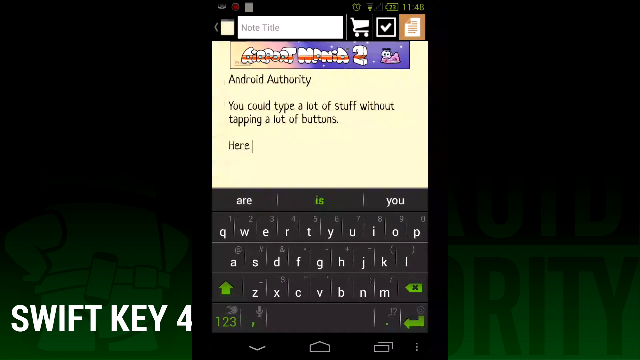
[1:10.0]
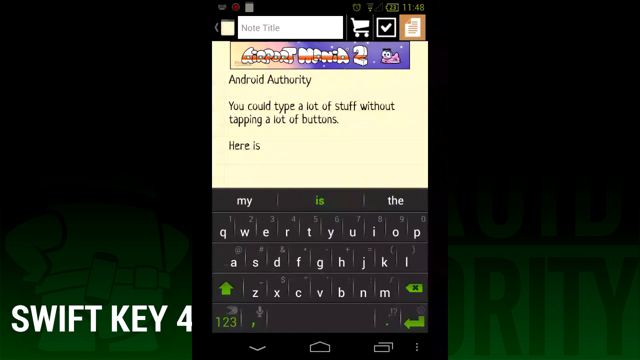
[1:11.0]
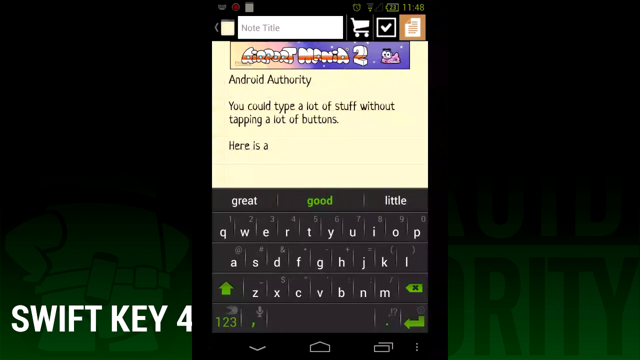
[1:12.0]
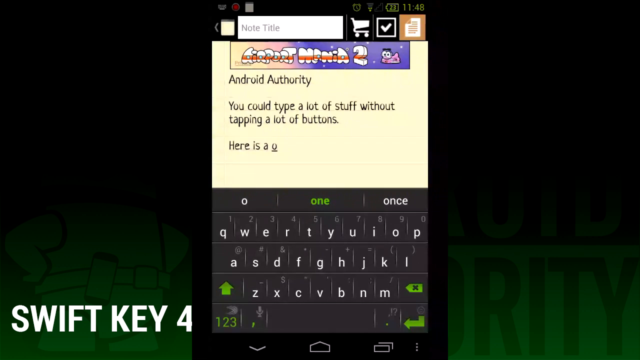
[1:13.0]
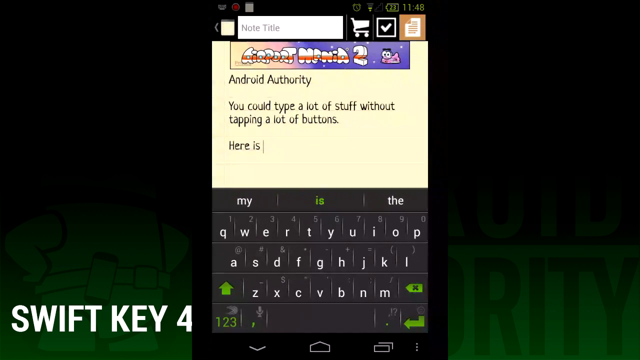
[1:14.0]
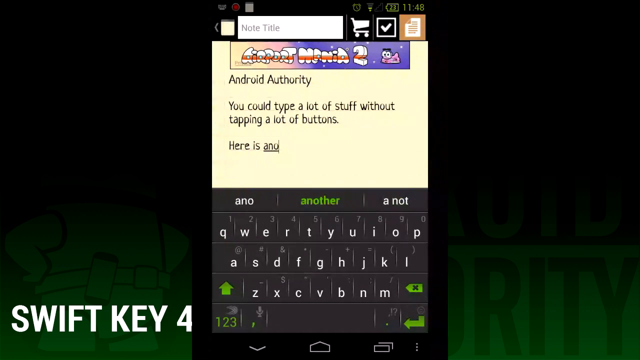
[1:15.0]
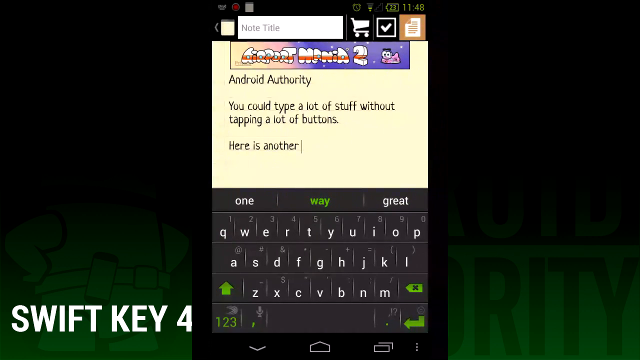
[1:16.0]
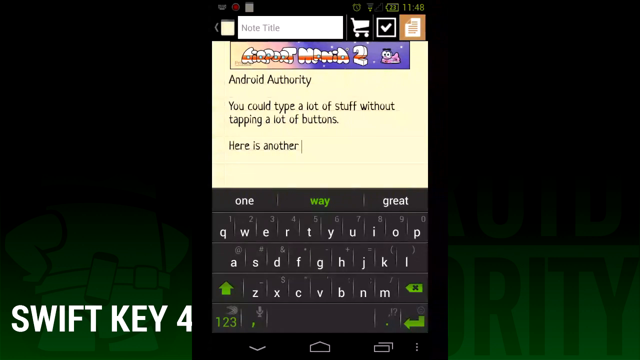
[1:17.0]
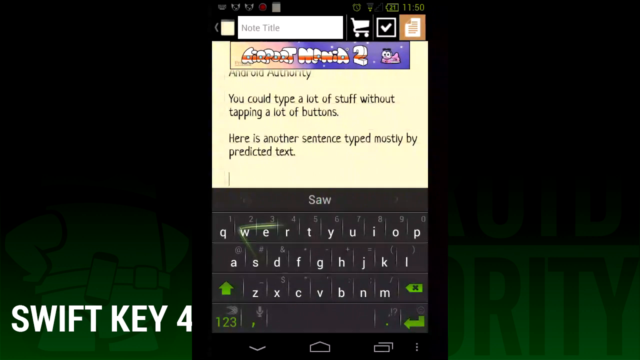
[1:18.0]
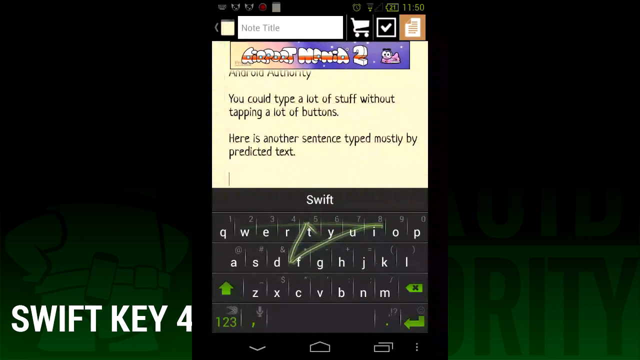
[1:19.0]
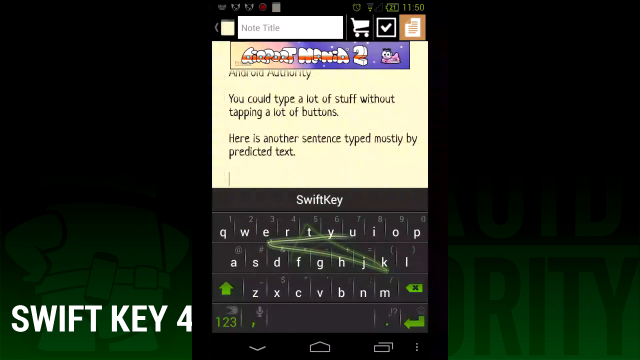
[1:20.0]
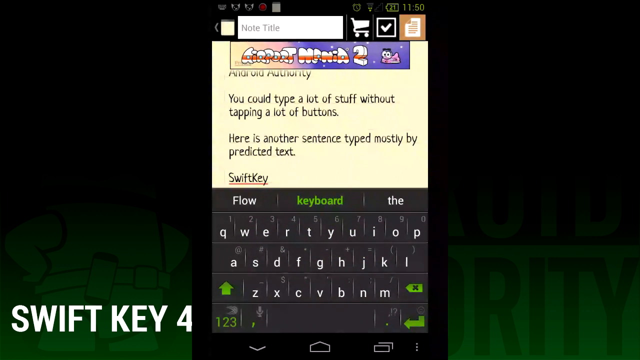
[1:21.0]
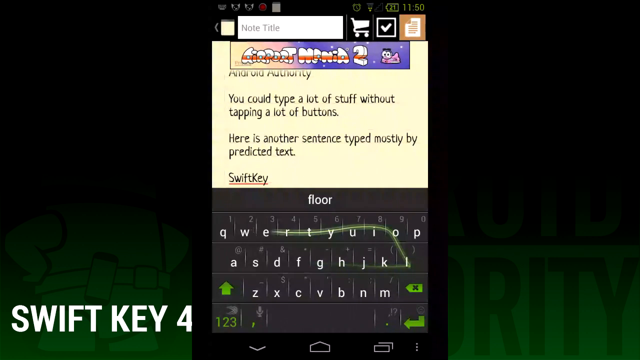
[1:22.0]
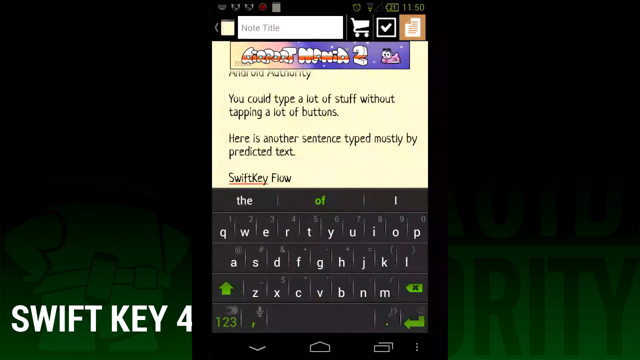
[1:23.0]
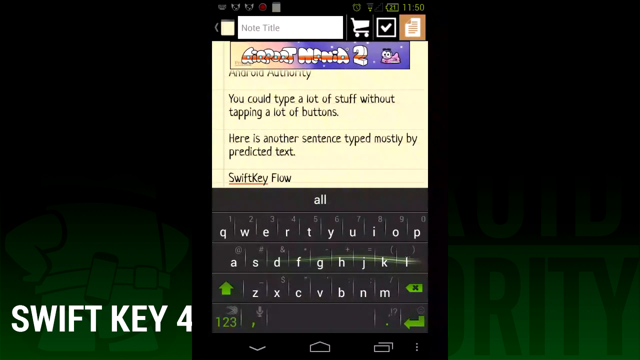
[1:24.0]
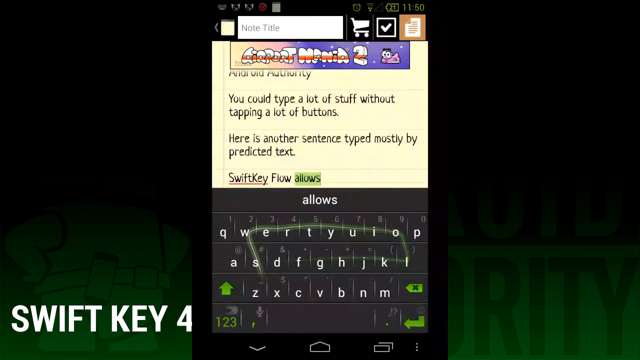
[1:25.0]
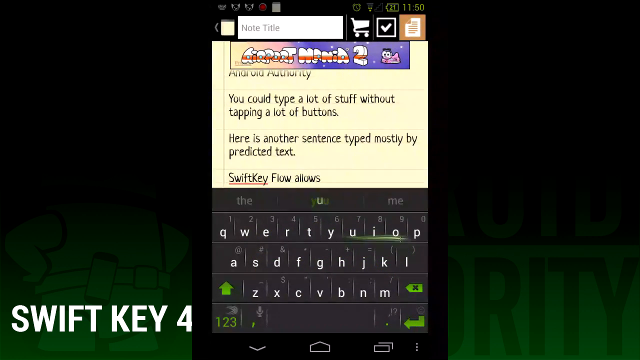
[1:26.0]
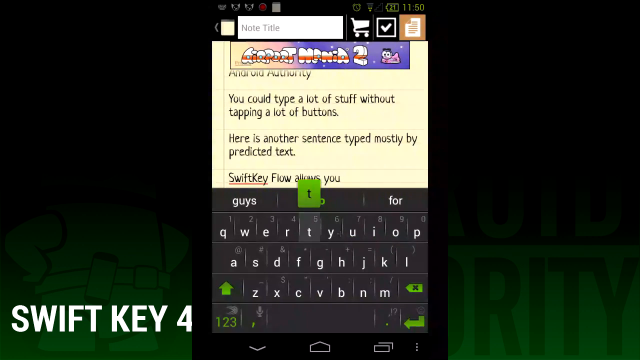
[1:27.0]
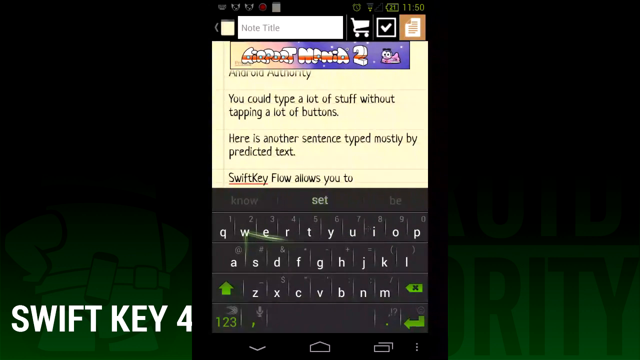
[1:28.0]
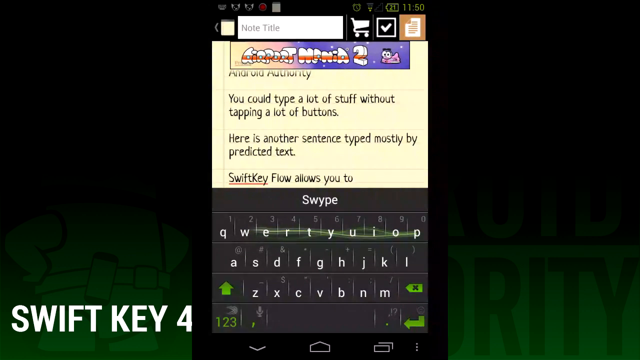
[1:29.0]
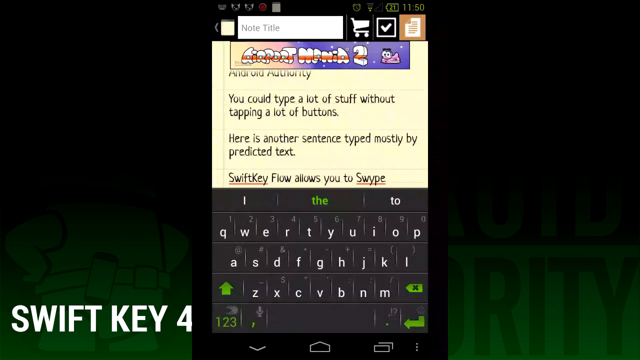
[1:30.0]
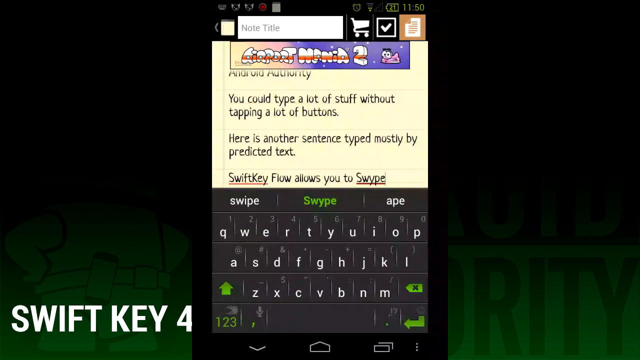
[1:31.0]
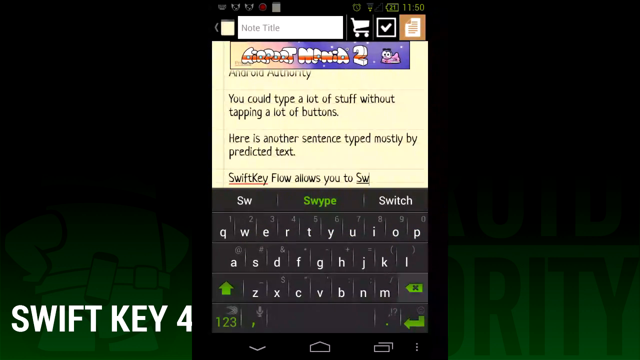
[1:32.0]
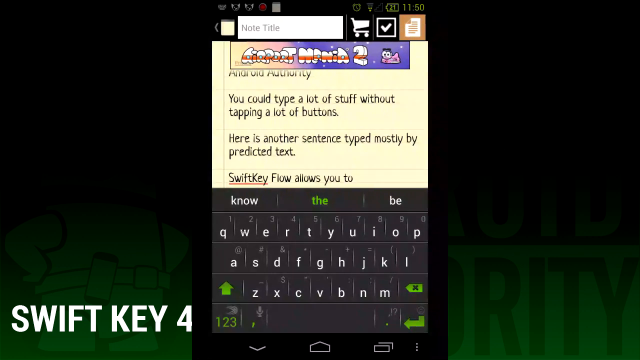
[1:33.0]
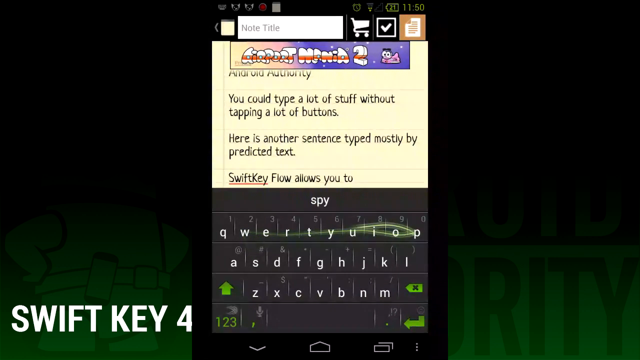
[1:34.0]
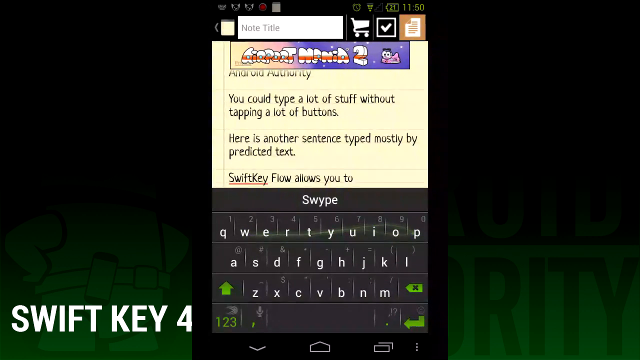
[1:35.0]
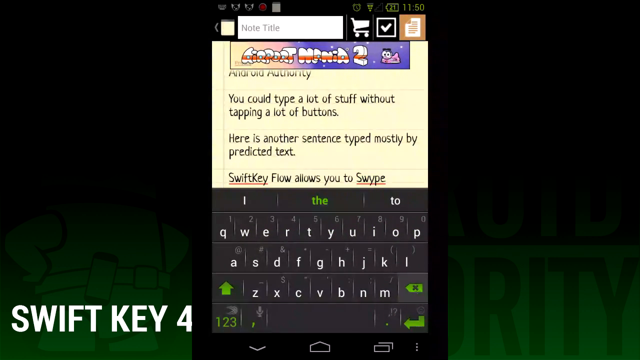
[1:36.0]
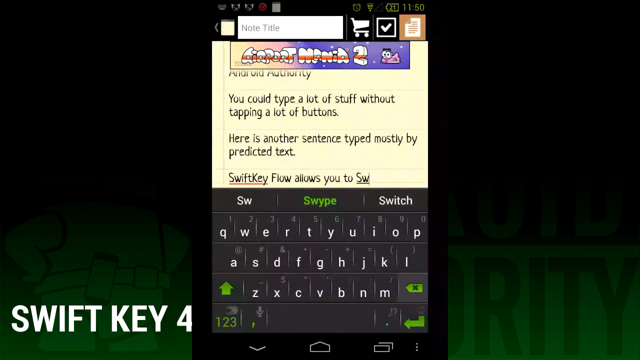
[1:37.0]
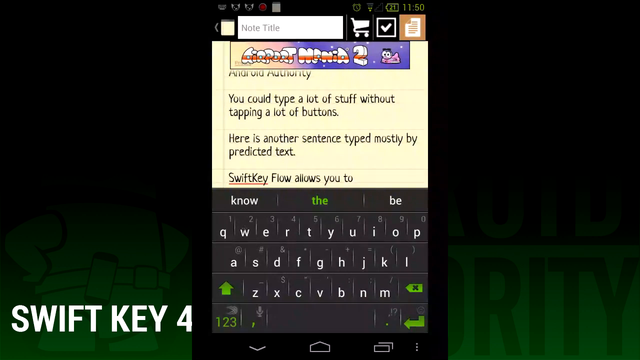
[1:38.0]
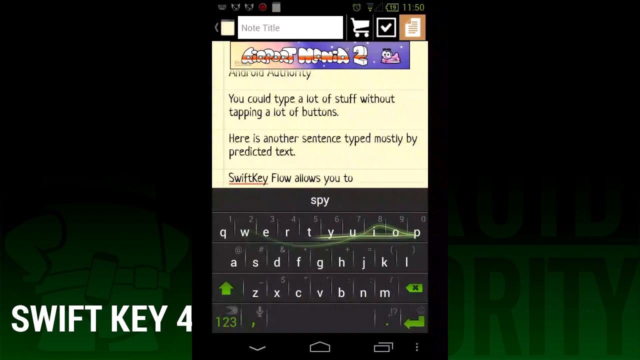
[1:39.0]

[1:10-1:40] The screen says "Android Authority" and, after a space, "you could type a lot of stuff without tapping a lot of buttons". The person starts typing again, and the sentence is capitalised. The typed text reads "here is another sentence type mostly by predicted text", followed by "SwiftKey Flow allows to", apparently about swiping. The typing moves slowly. Green lines move all over the phone's keyboard; it is unclear whether word suggestions are appearing and being clicked.